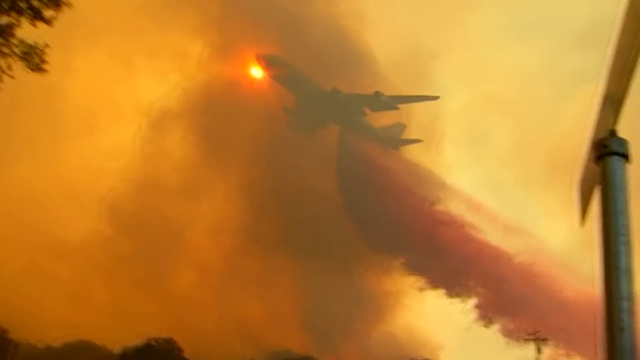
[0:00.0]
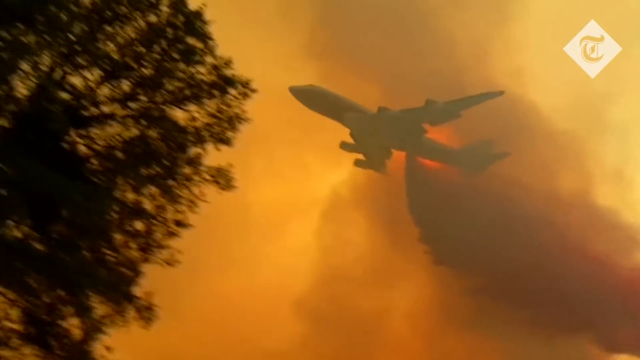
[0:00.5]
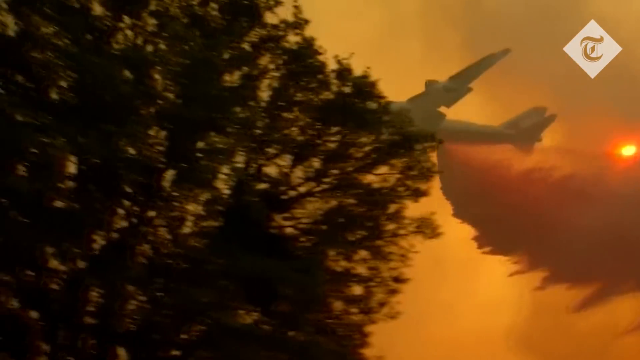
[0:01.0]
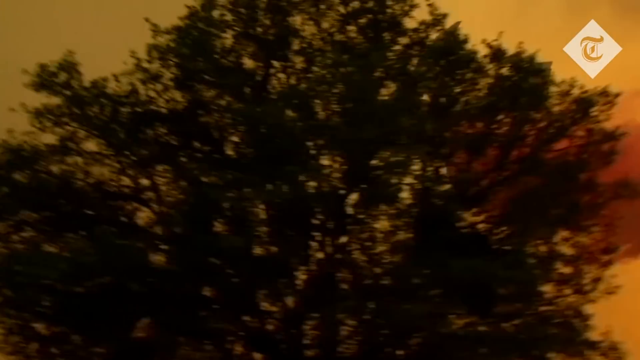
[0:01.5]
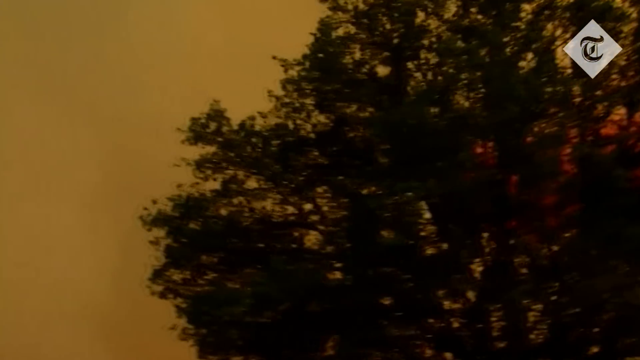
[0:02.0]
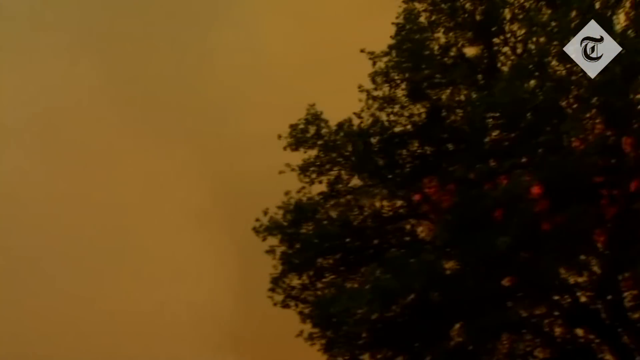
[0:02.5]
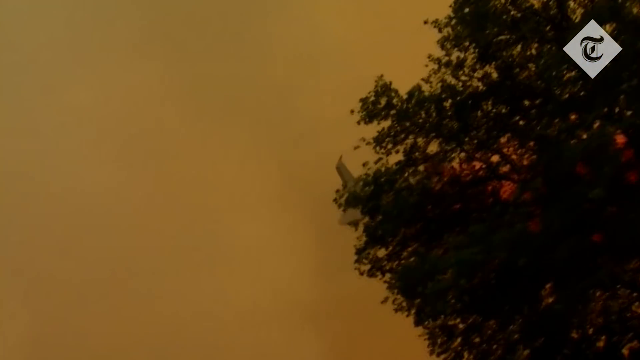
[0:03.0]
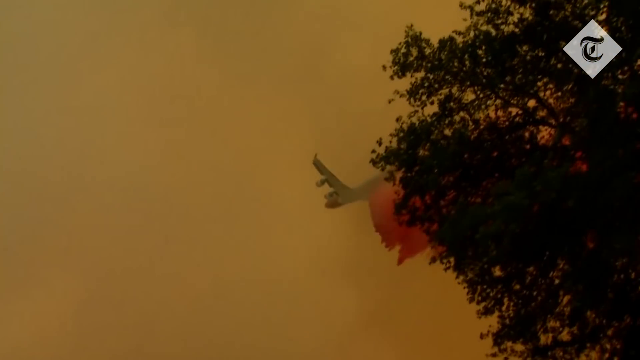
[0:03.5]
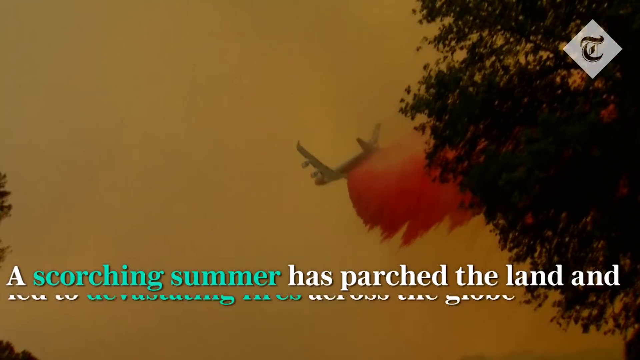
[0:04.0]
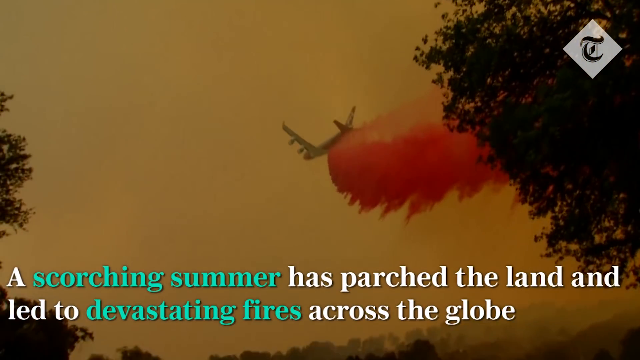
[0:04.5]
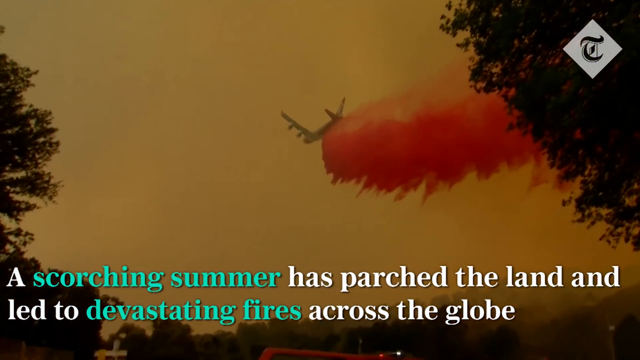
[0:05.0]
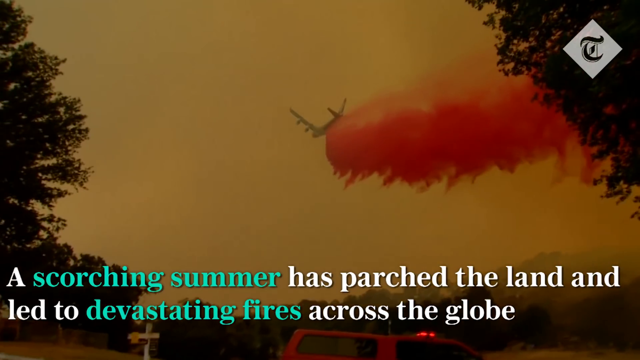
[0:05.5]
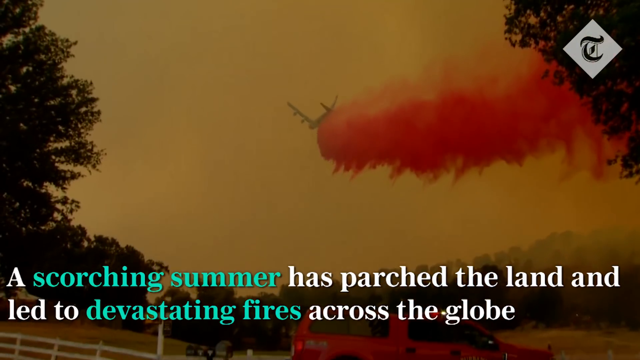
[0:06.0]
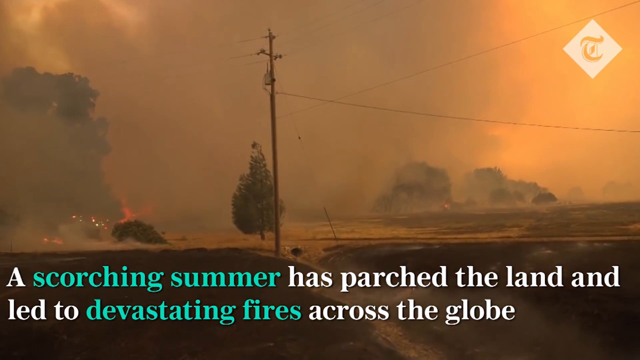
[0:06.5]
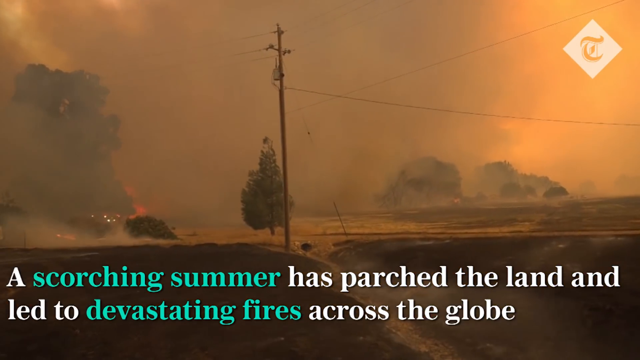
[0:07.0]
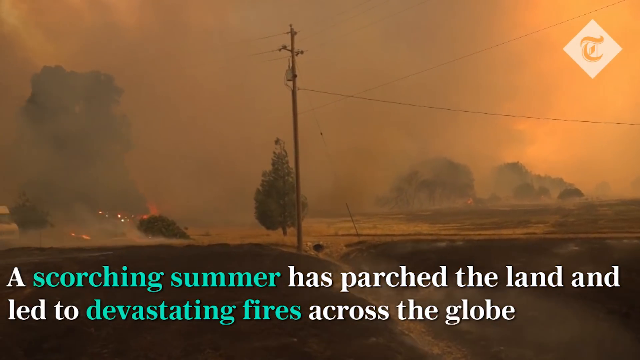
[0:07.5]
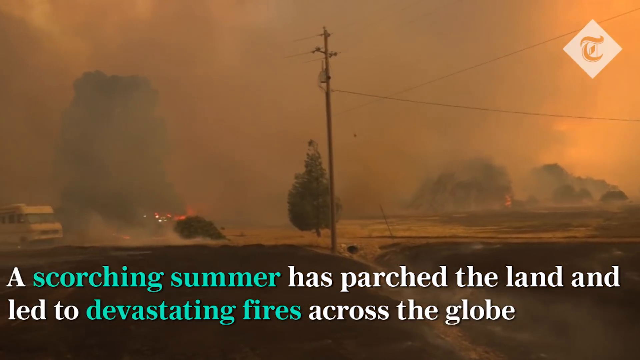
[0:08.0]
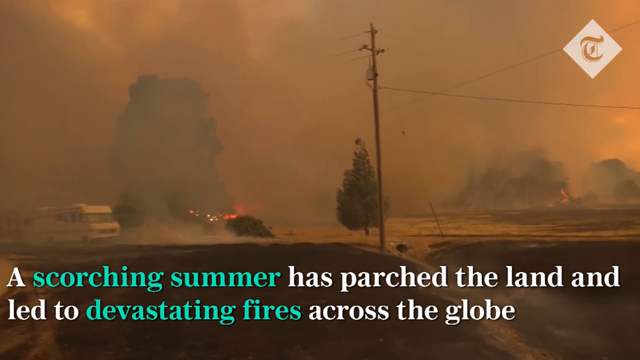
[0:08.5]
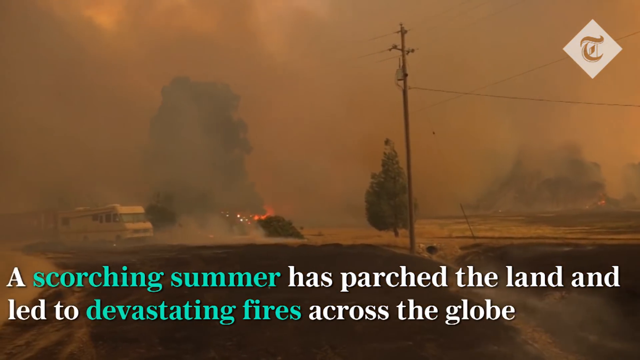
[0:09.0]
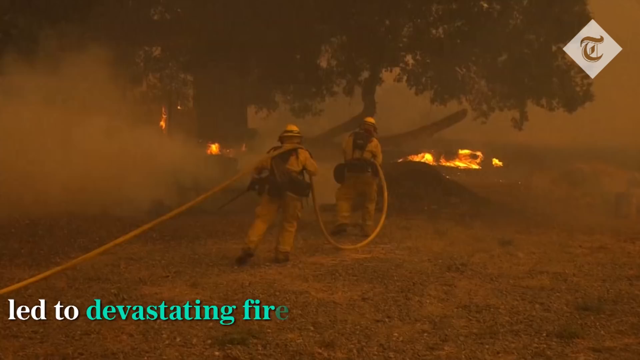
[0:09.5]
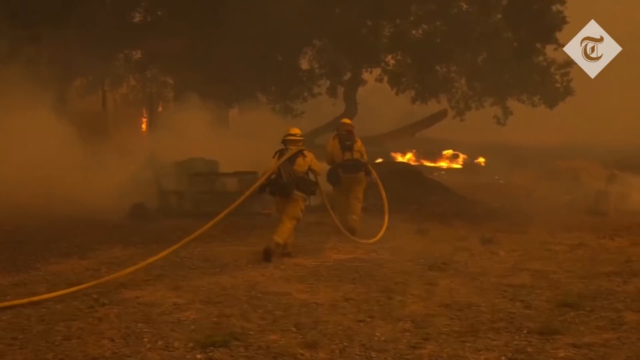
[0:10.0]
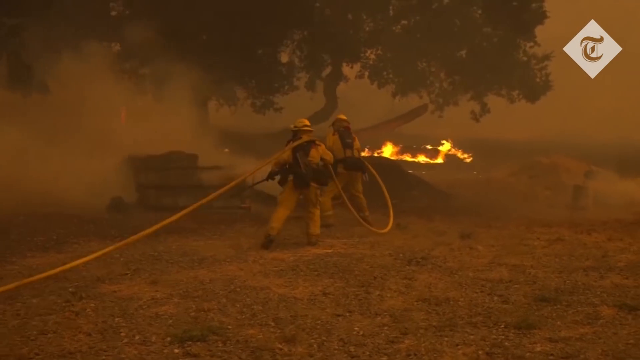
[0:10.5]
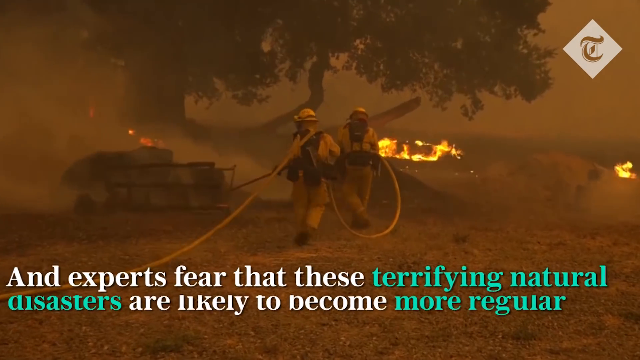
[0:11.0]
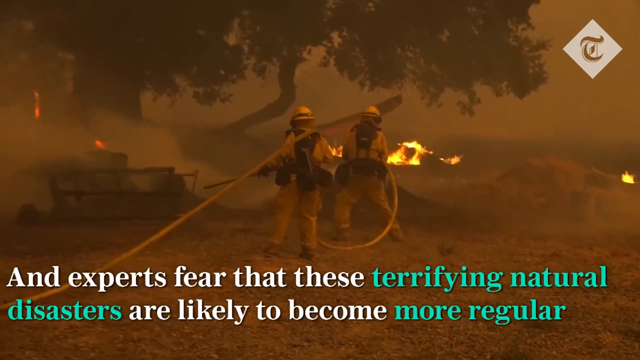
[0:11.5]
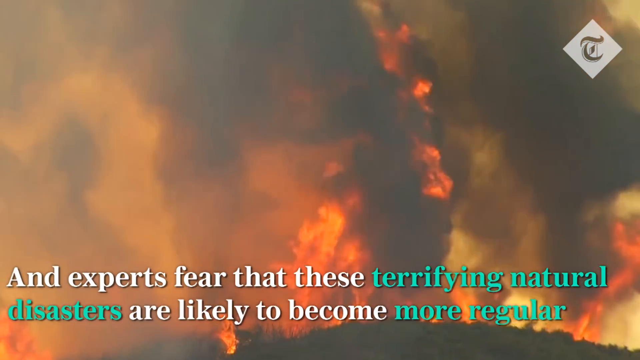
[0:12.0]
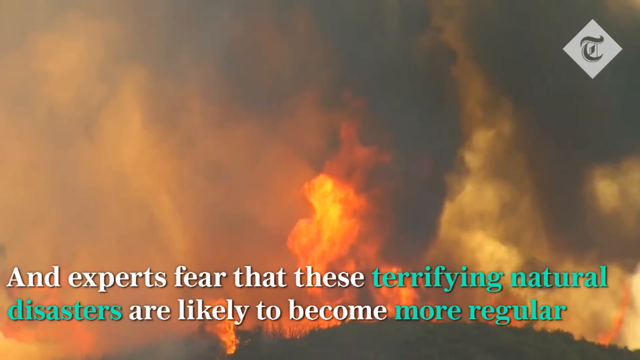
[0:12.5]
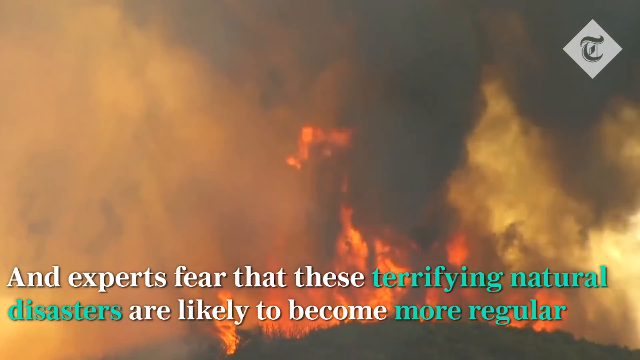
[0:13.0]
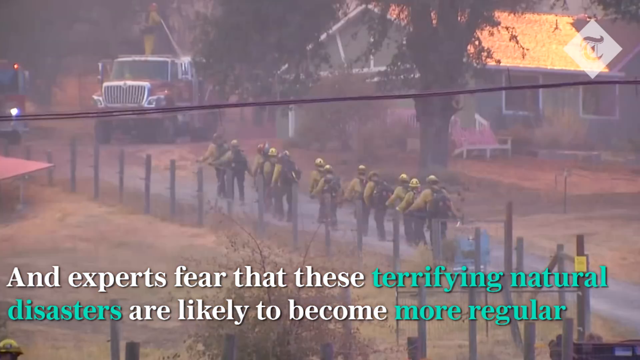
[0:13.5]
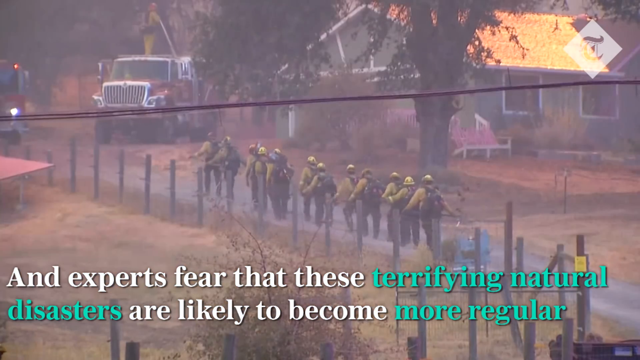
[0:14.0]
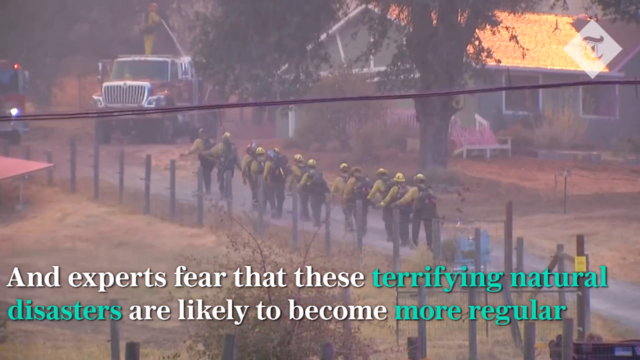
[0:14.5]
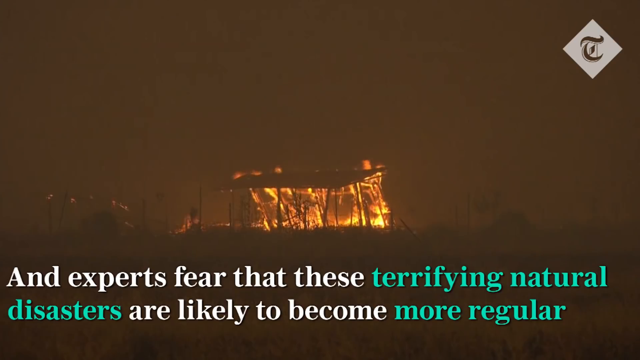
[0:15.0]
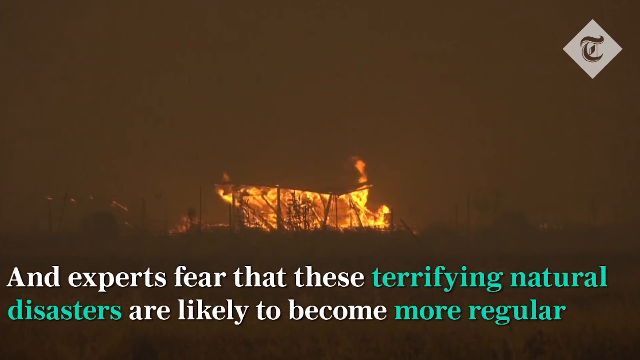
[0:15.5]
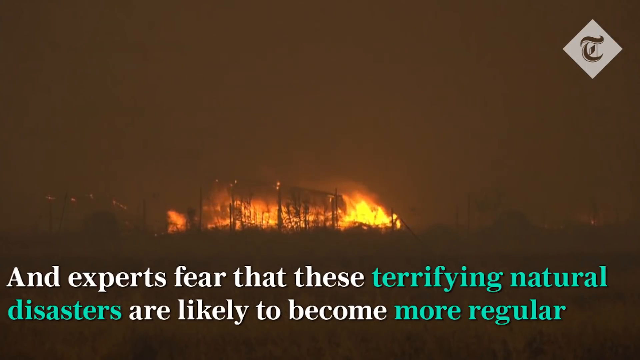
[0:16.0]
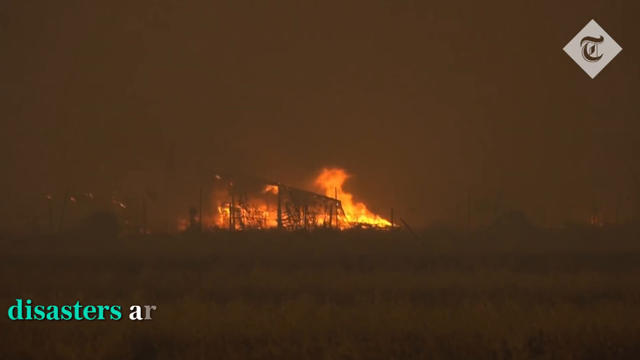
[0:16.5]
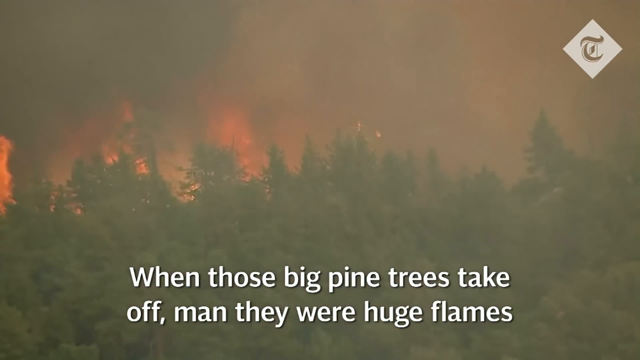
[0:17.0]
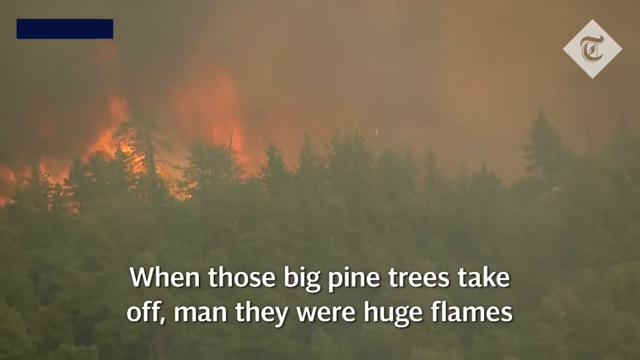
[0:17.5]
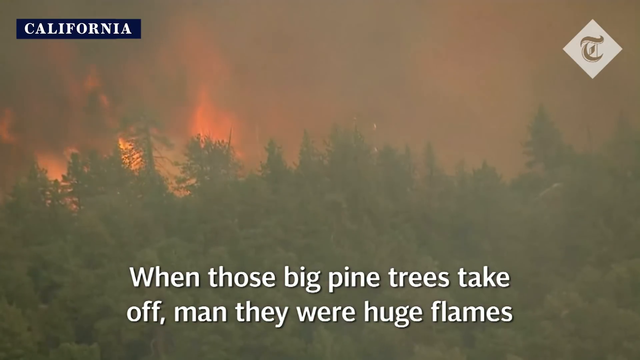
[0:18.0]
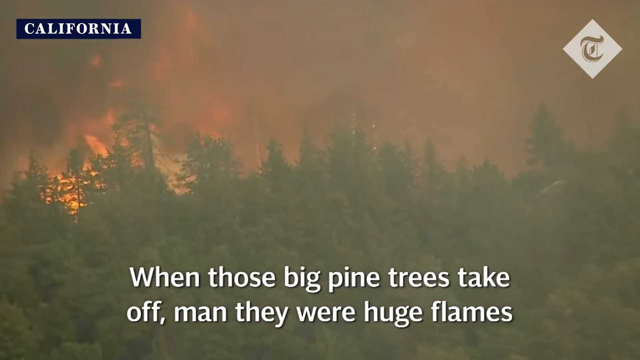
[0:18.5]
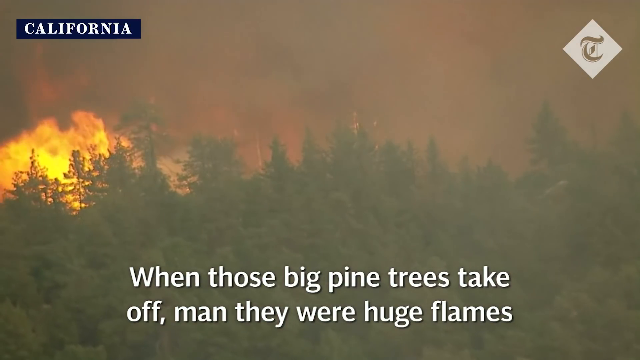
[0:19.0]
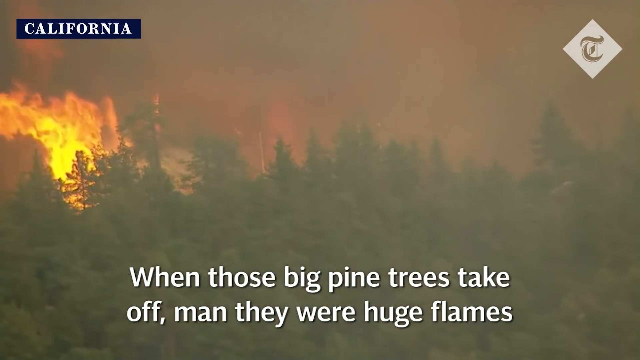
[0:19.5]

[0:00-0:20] A burning aeroplane flies in the sky with a lot of fire on it, apparently after an explosion, until it goes down. Many firefighters are trying to keep the fire from spreading to other places. Trees are affected by the fire, and there is a lot of fire at houses as well. Text is written on the screen, ending with "become more regular".